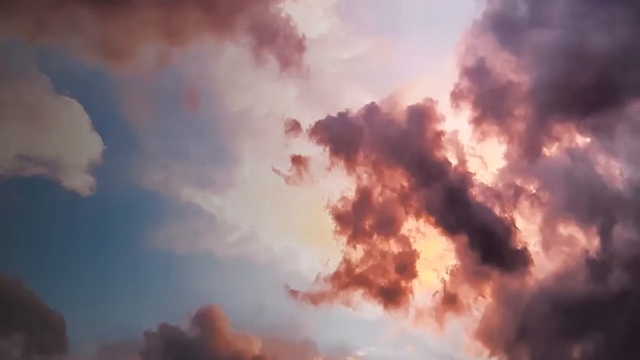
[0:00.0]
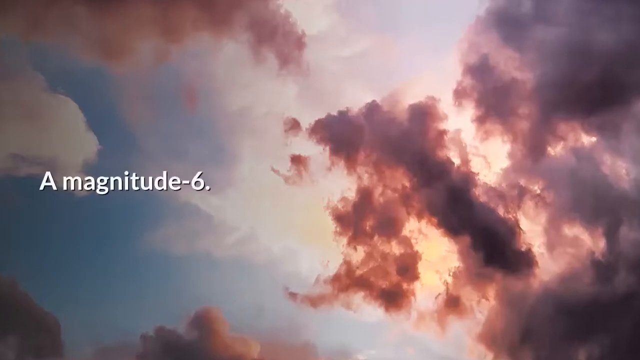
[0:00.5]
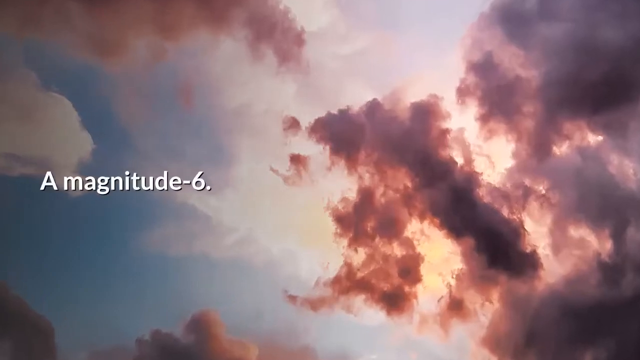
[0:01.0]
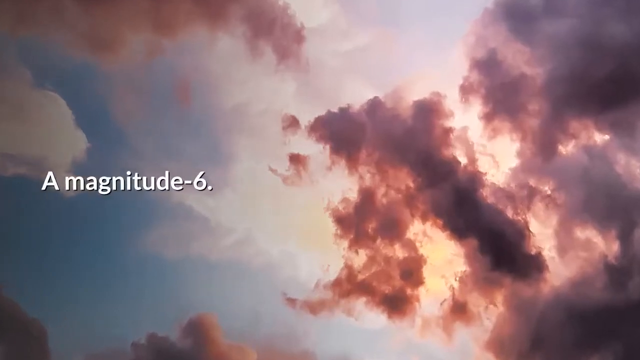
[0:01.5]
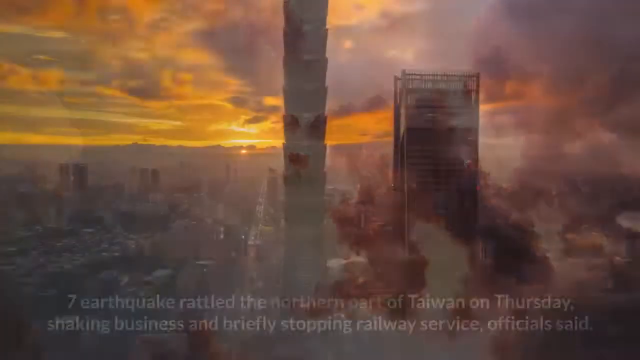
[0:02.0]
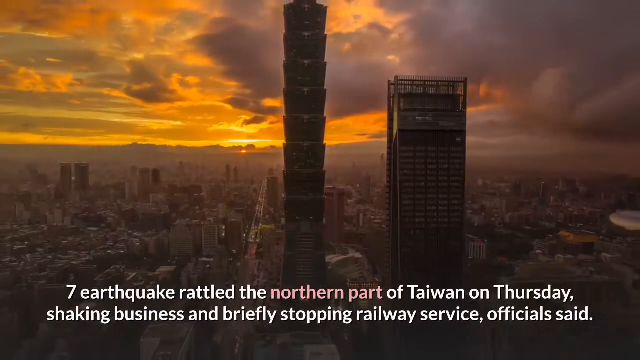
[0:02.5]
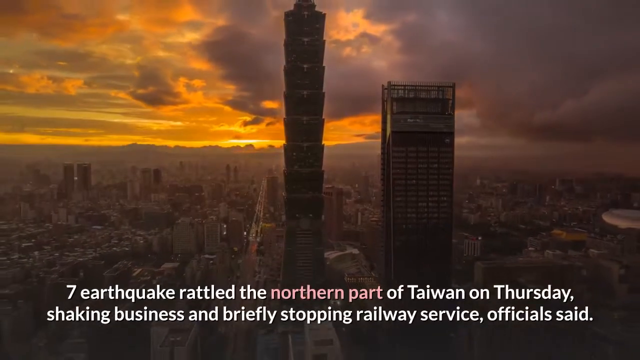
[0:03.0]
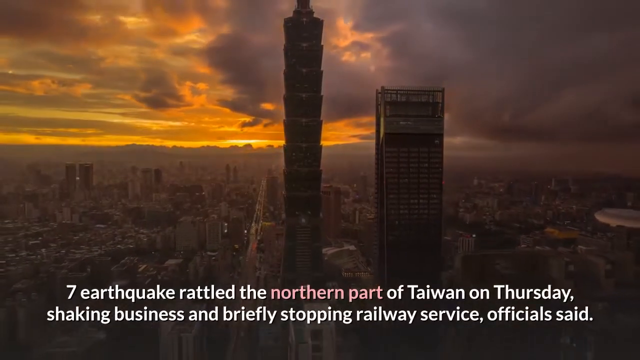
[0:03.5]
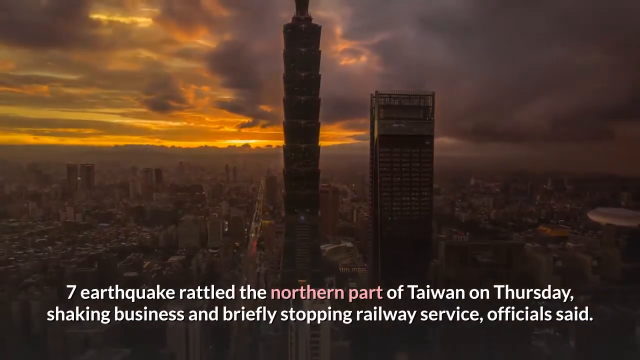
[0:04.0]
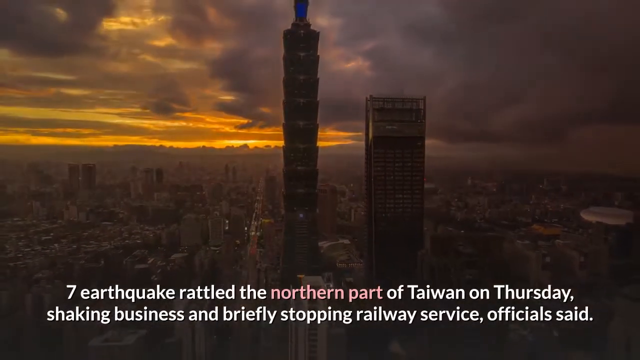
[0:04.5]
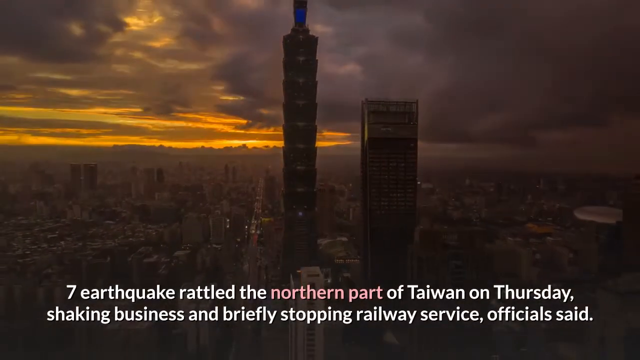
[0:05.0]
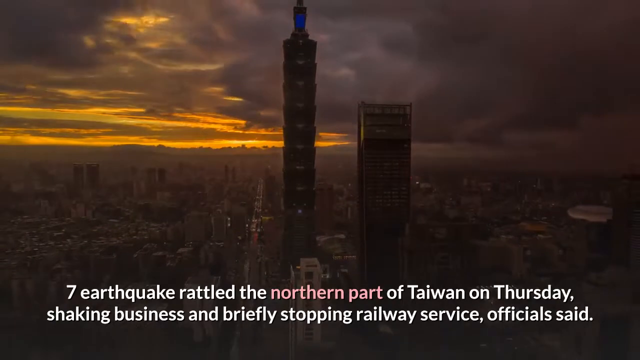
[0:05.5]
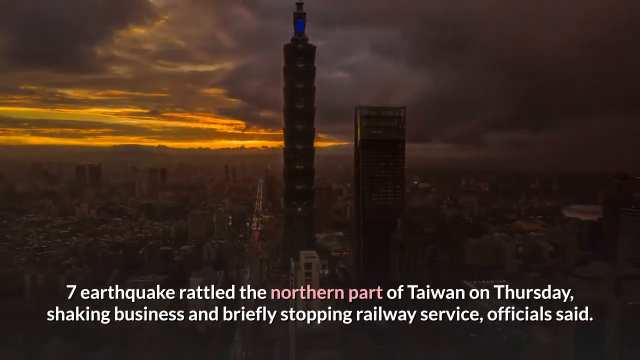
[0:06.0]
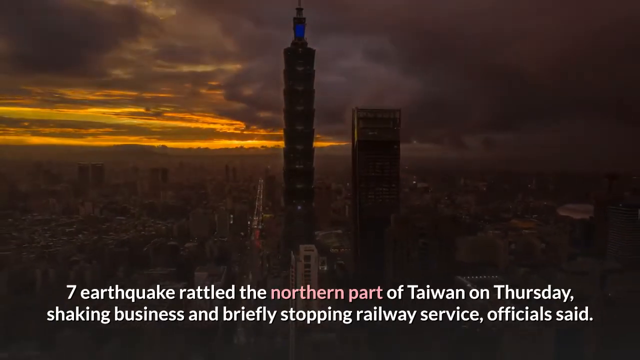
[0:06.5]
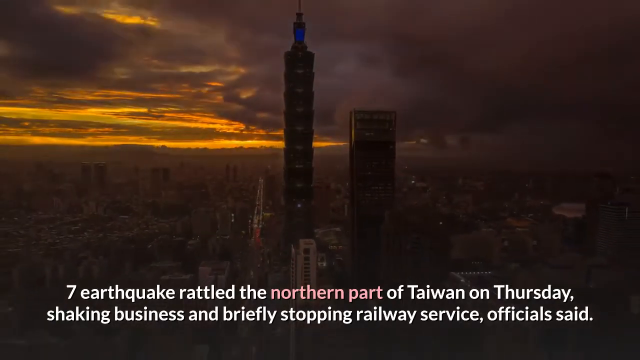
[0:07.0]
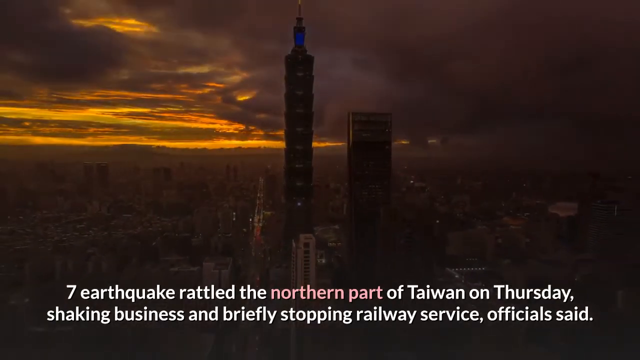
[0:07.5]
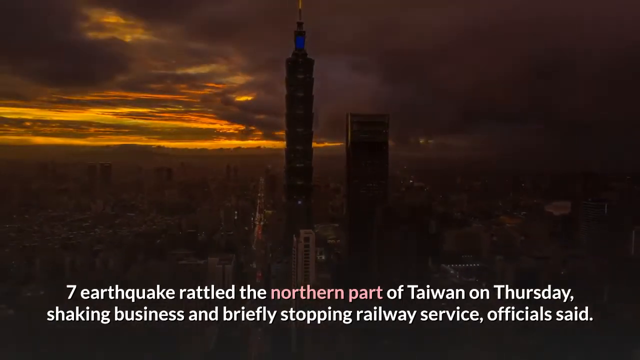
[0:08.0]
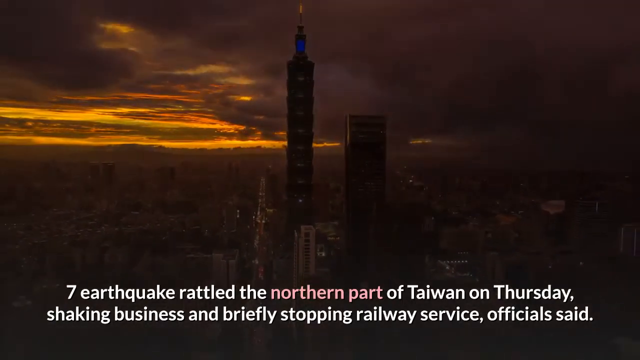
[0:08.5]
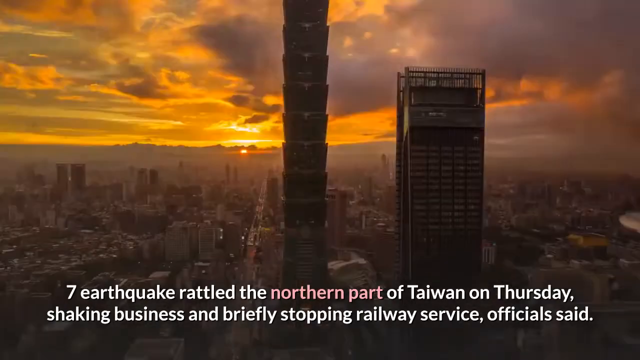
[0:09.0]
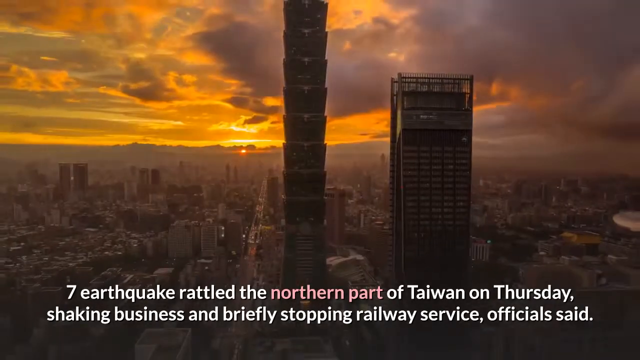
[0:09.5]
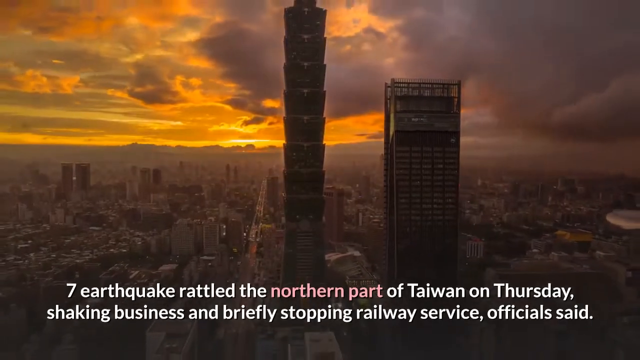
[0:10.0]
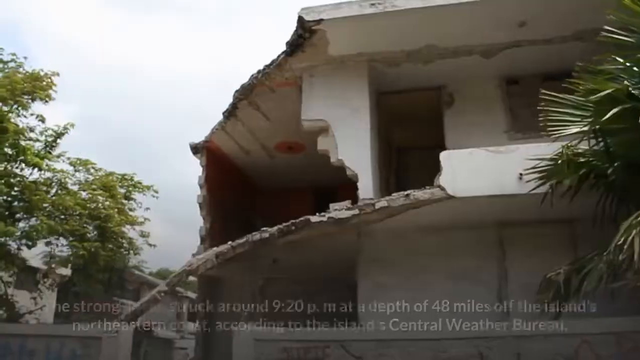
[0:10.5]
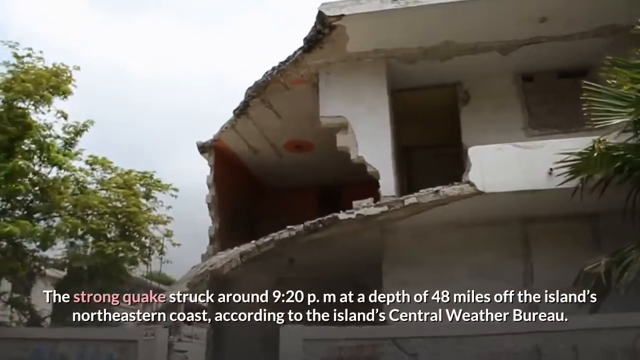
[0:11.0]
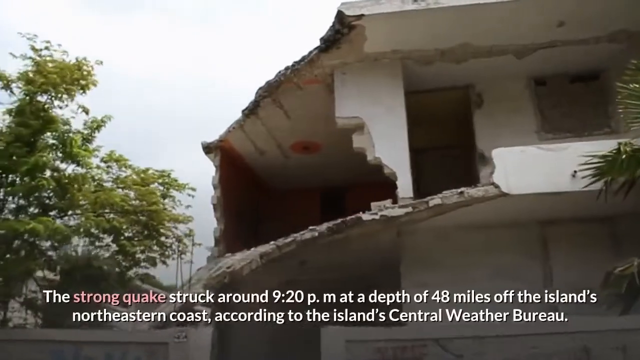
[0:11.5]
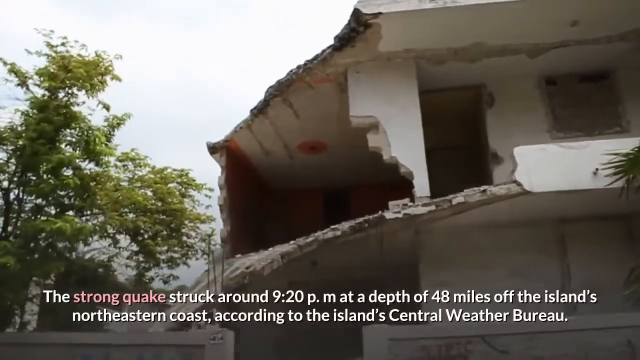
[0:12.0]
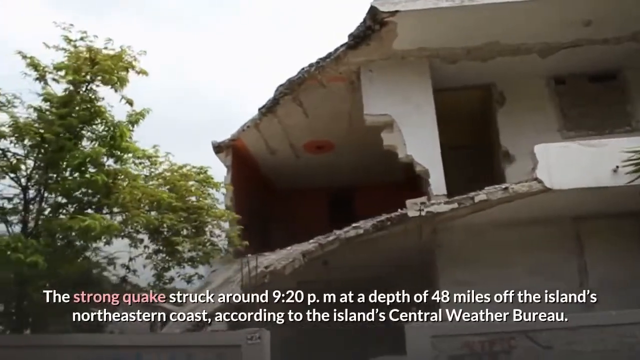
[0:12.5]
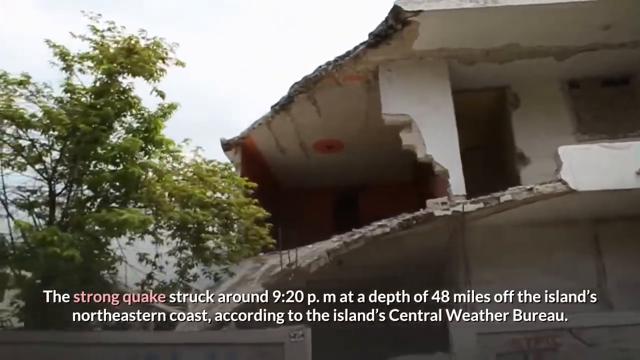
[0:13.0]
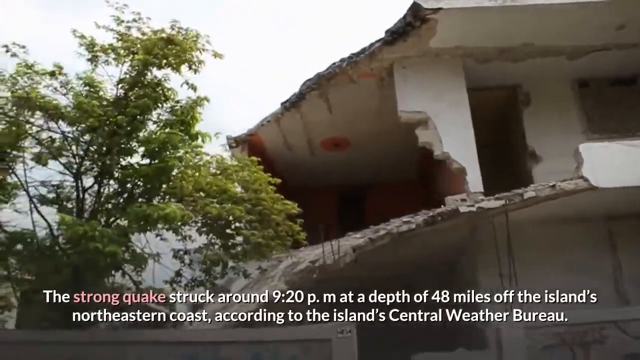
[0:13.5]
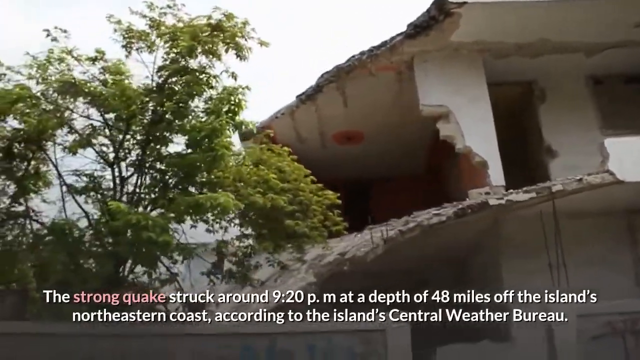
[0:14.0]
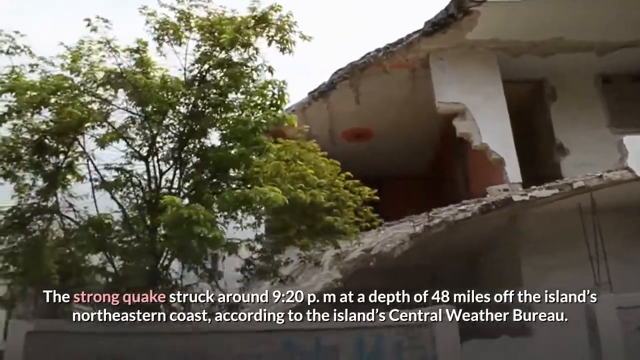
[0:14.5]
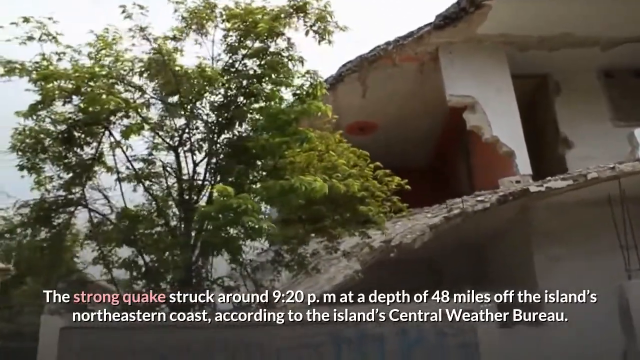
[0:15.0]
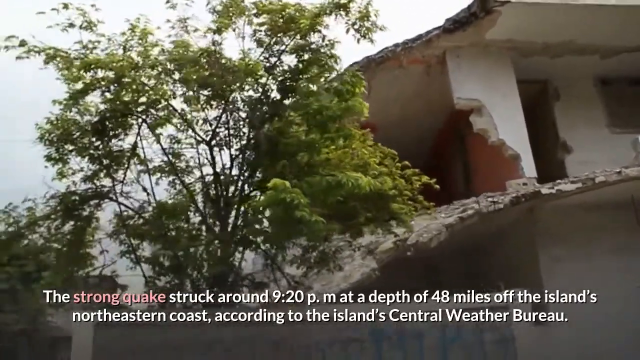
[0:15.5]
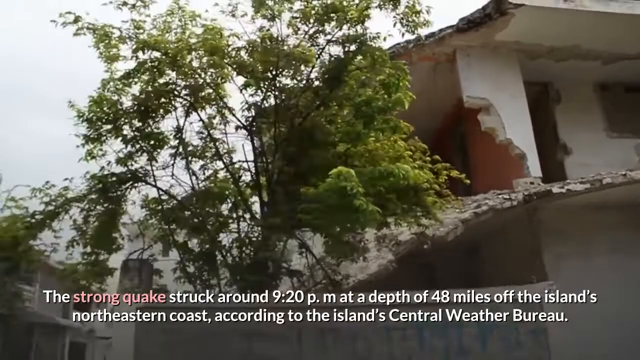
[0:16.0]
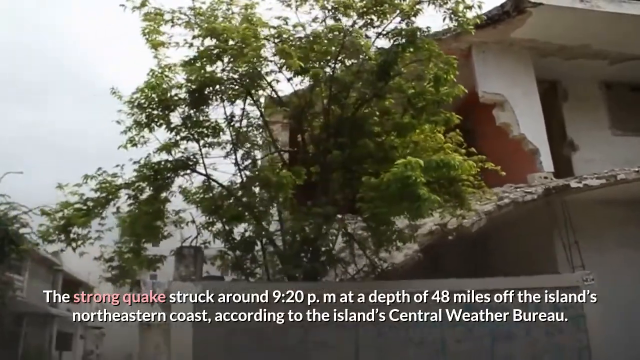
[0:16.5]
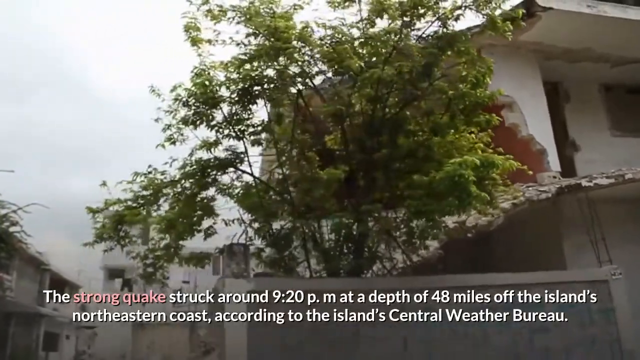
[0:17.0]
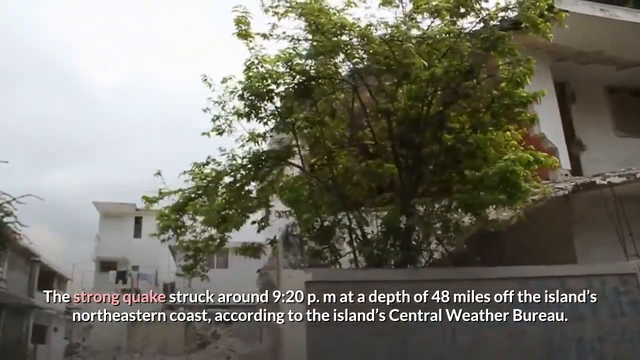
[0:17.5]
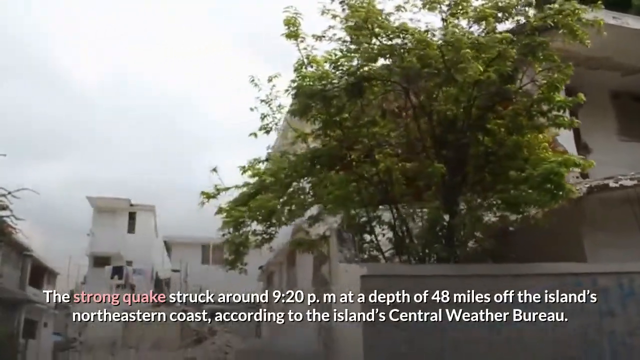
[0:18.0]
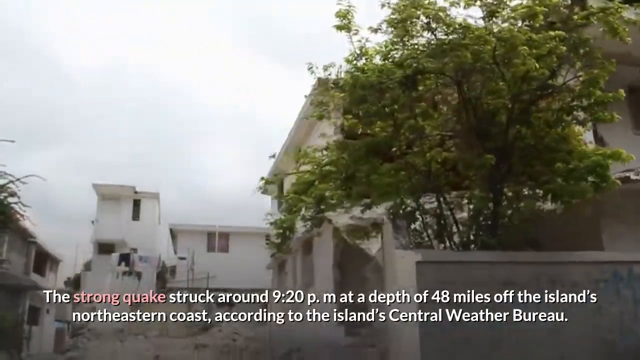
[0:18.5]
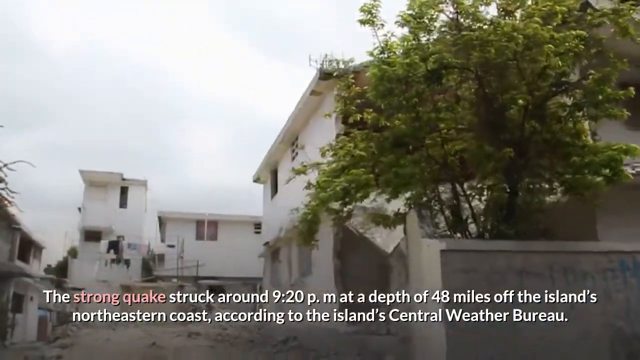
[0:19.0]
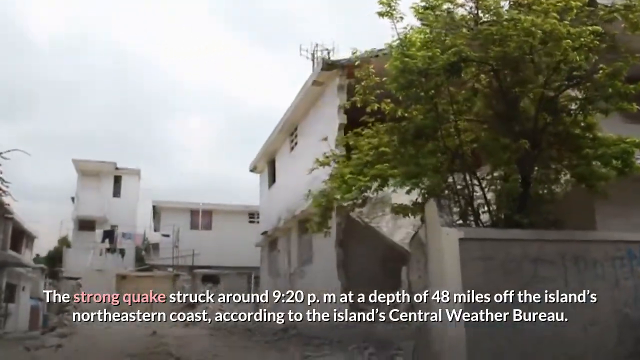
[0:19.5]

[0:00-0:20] A huge red cloud appears in the sky above, followed by text beginning "a magnitude". A view of a city with many properties appears, with a statement at the bottom of the screen: "earthquake rattled the northern part of Taiwan on Thursday, shaking businesses and briefly stopping railway service. Officials said." The city view continues as the camera zooms out, showing the city from far away. Broken houses then appear, seemingly destroyed by the earthquake, while a statement below reads: "the strong quake struck around 9.20pm at the depth of 48 miles off the island's northeastern coast".